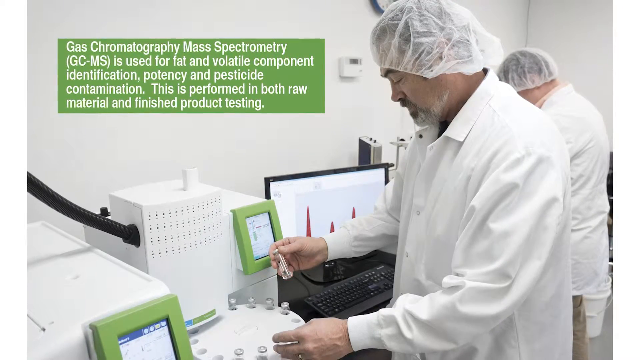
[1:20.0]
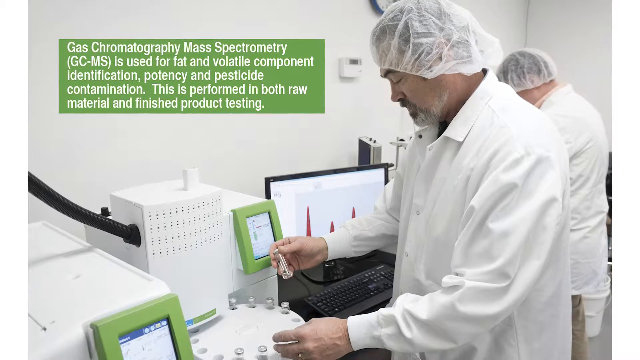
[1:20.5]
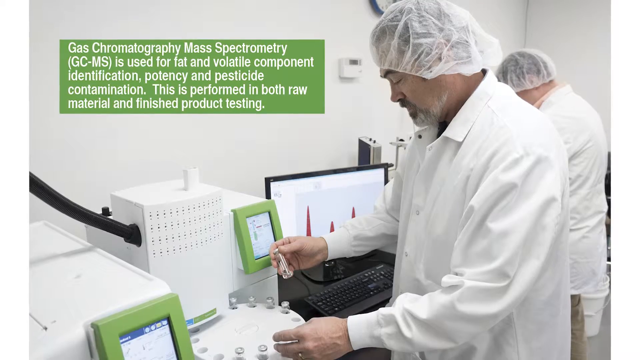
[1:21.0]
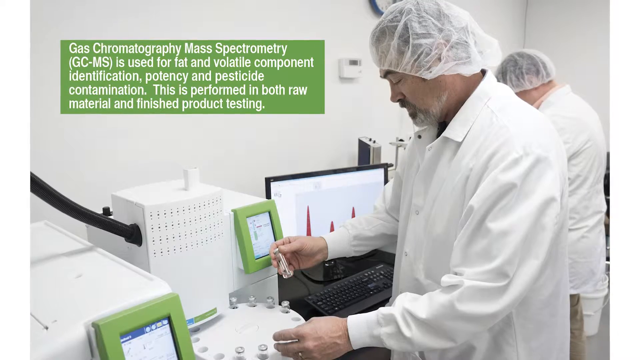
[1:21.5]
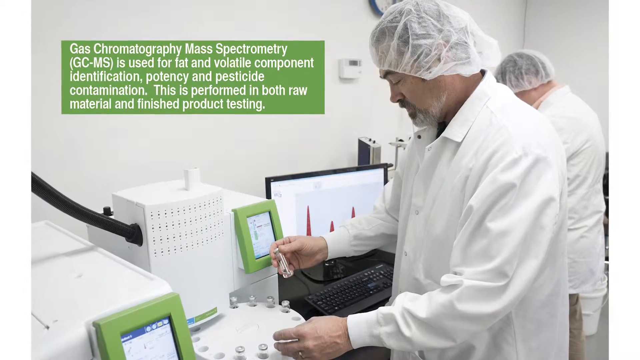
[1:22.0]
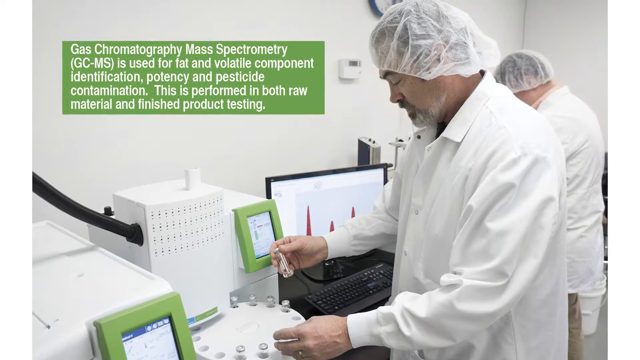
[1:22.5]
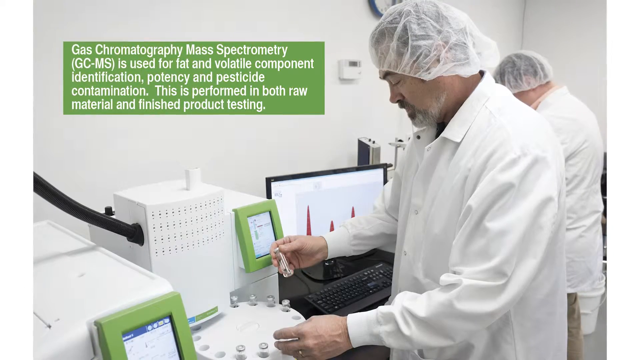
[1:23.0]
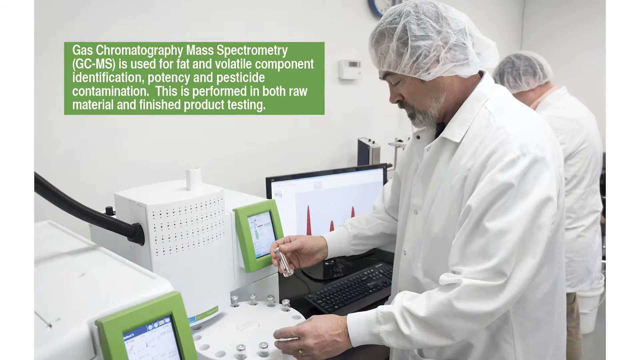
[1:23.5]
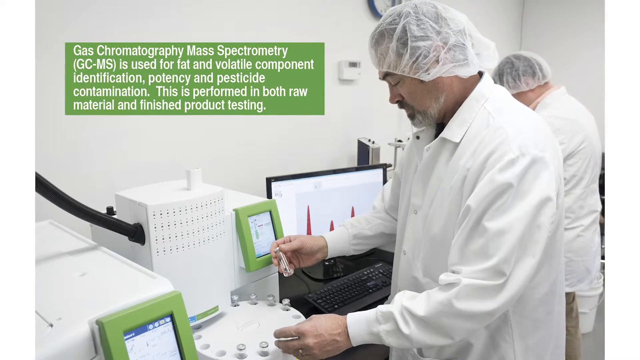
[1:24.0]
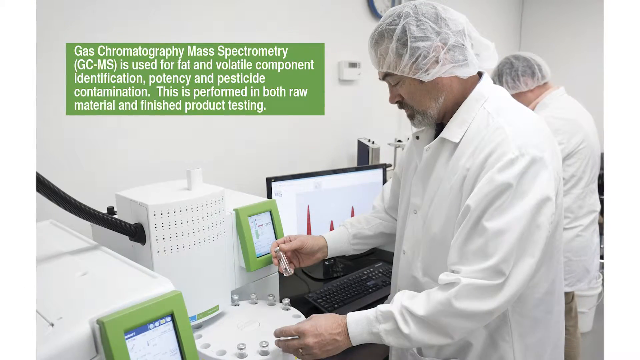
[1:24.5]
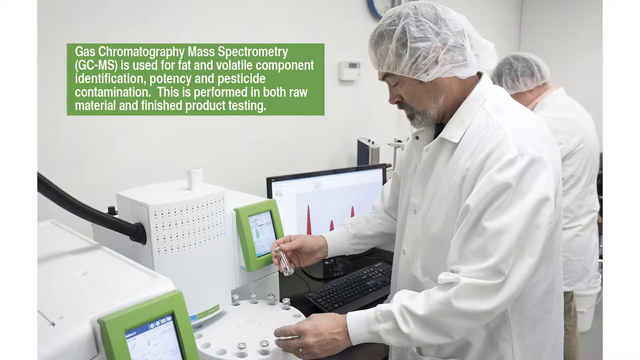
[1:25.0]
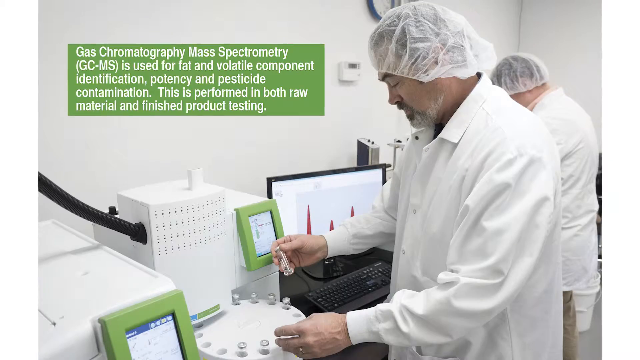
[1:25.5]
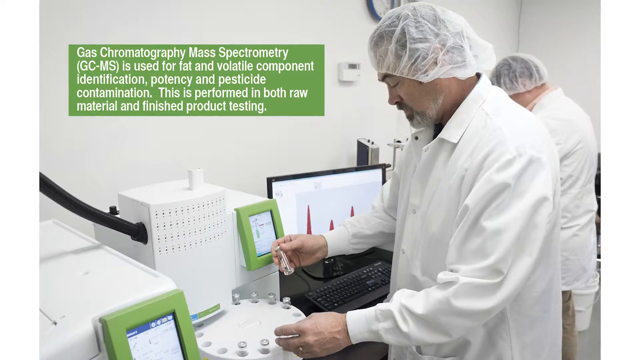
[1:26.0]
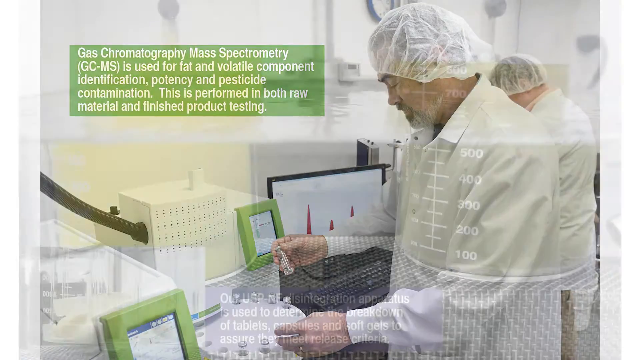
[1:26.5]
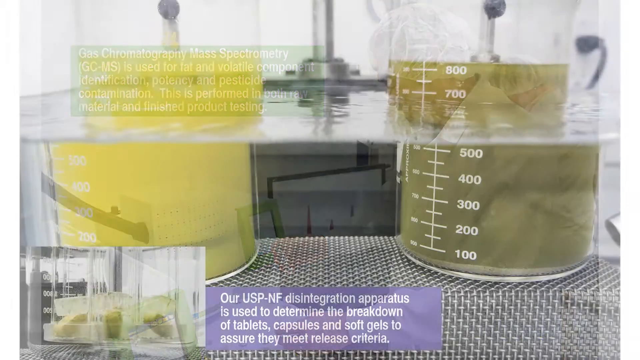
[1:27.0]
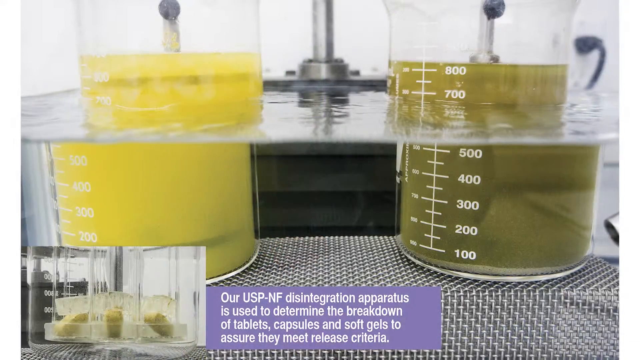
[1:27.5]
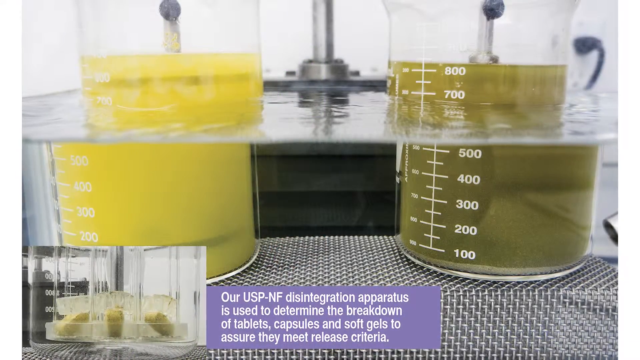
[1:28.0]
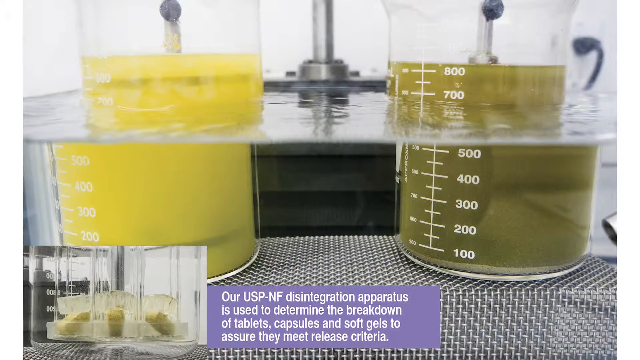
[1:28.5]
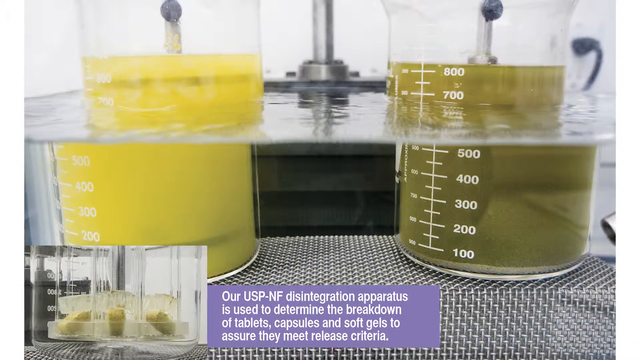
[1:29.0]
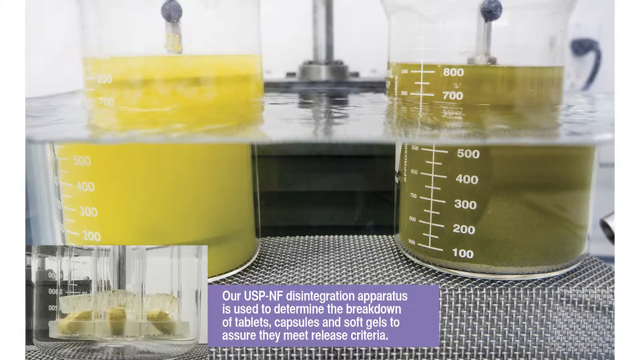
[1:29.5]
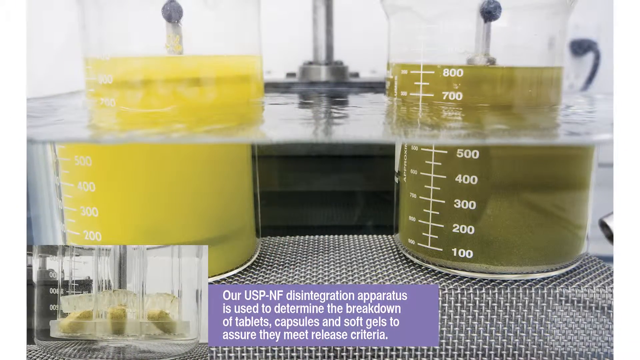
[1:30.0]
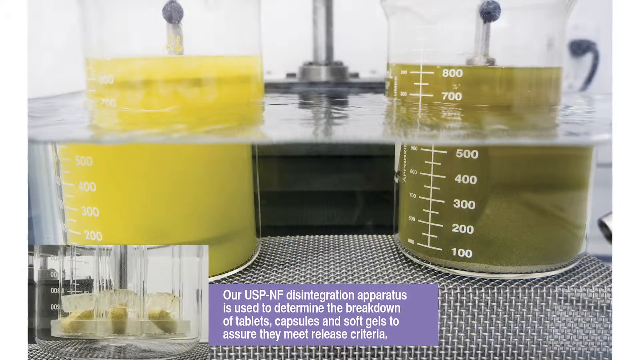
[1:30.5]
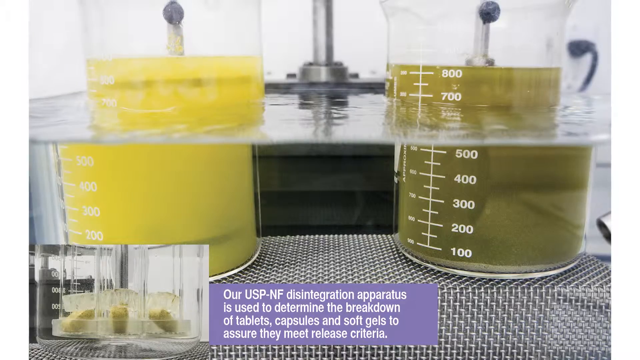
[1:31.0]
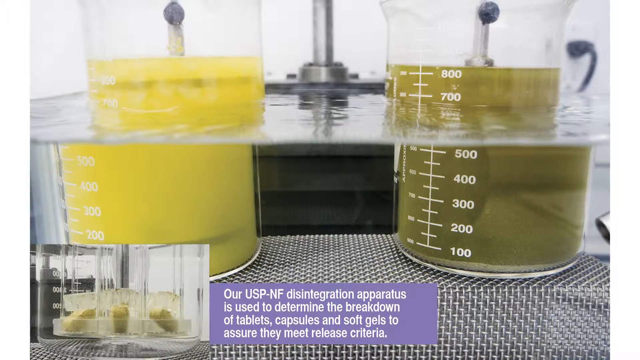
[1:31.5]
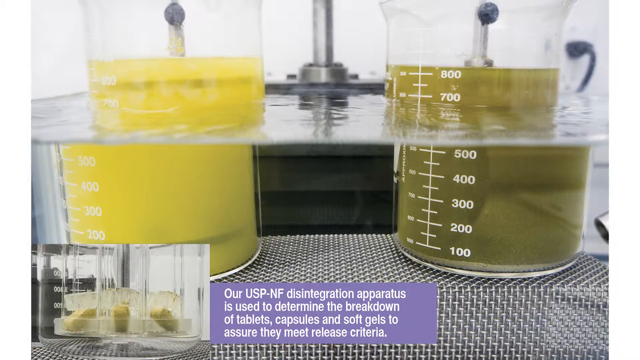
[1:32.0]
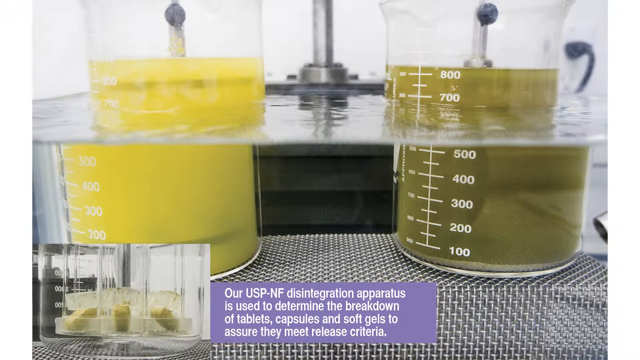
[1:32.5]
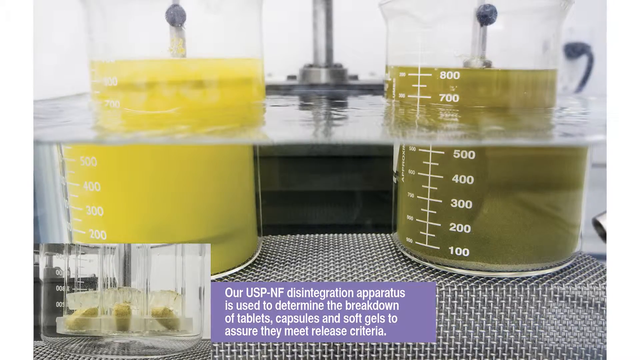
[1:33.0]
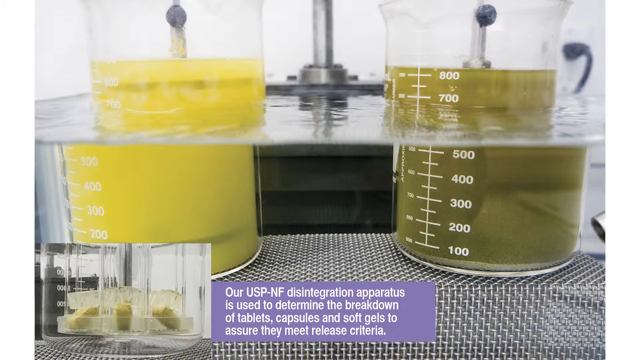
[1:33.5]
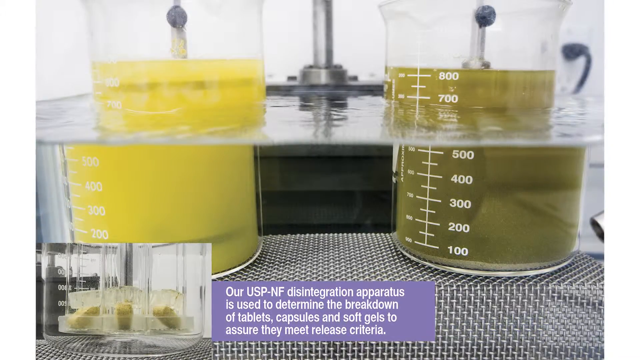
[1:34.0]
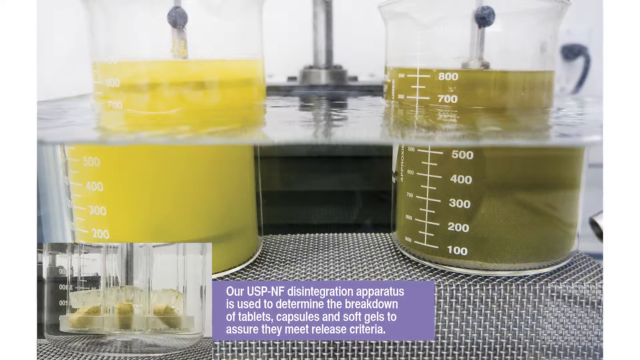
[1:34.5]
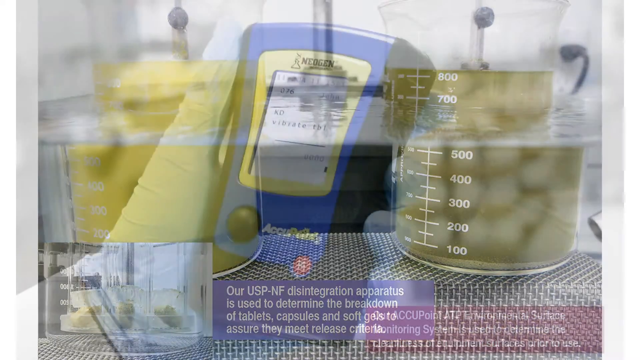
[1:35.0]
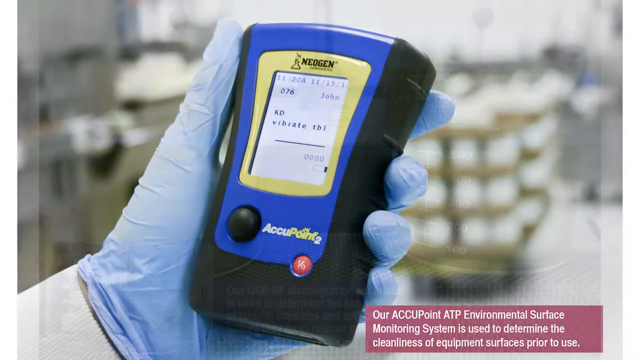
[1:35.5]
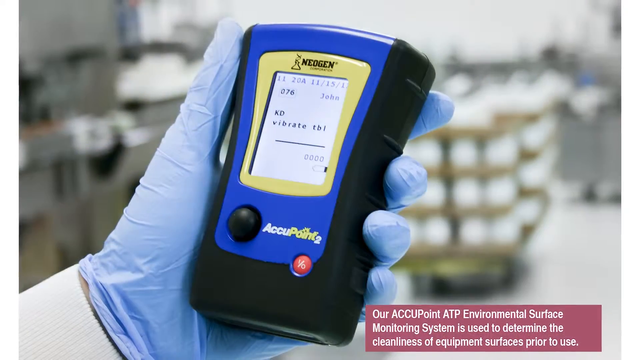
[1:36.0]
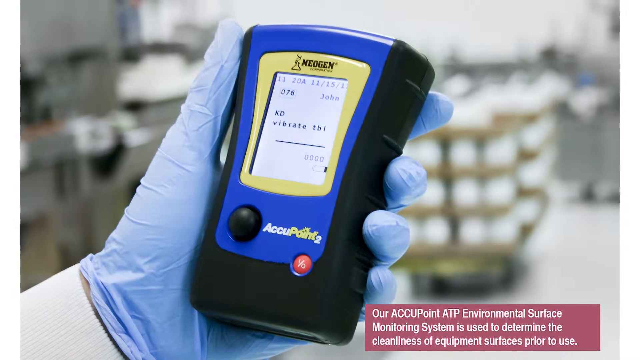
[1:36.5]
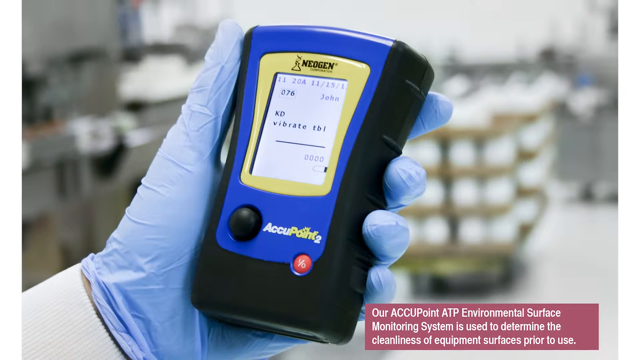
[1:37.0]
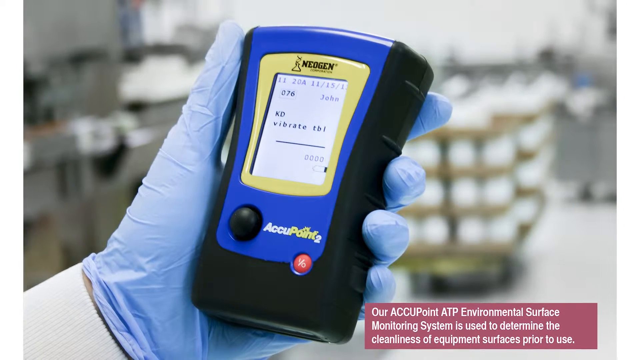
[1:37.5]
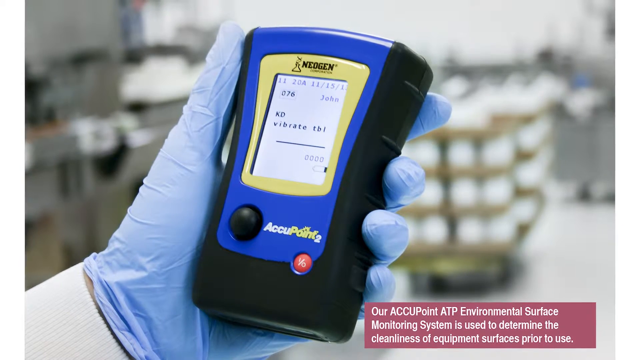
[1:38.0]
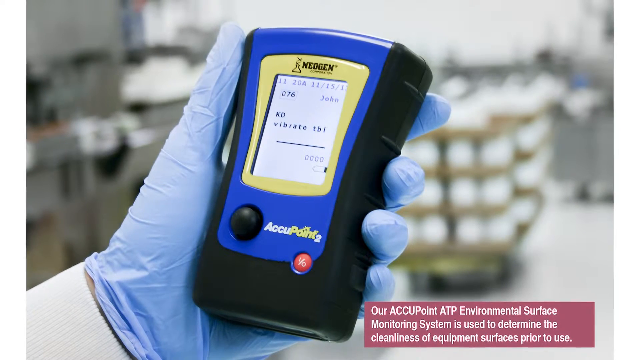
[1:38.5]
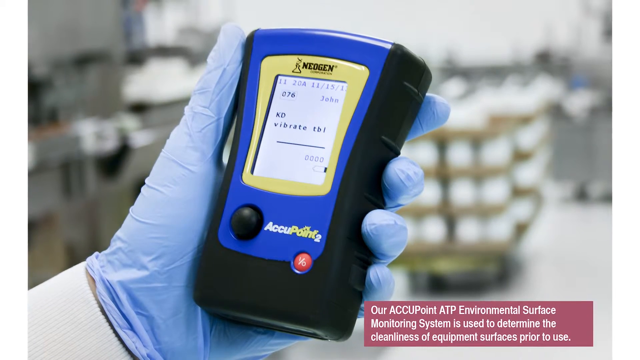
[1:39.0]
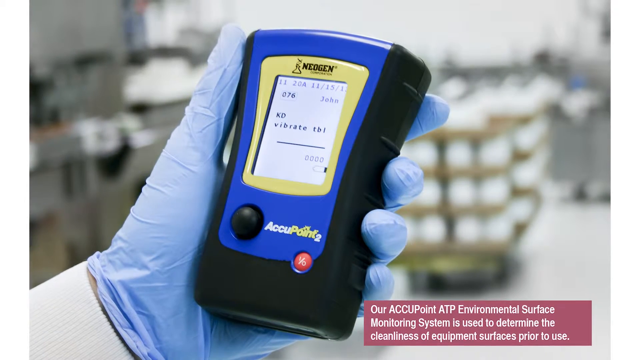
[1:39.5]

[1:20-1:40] A still photo shows a man in a lab holding a vial in his right hand, his left hand resting on a machine that holds other small, clear vials. He is not looking at the camera but down at the vials, and he wears a white lab coat and a white hairnet. To his right is a computer with a monitor. Catty-corner to his right is part of another man, also in a white lab coat and white hairnet; he is obstructed by the first man but looks like he is also handling some kind of equipment. After lingering for many seconds, the picture changes to an up-close still photo of two circular glass containers partially submerged in clear liquid. The container on the left has something yellow in it, and the one on the right has something green. The photo is taken from outside the vessel holding the clear liquid, looking straight at the two containers.